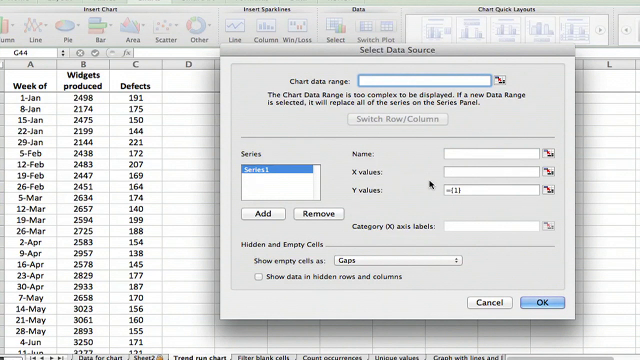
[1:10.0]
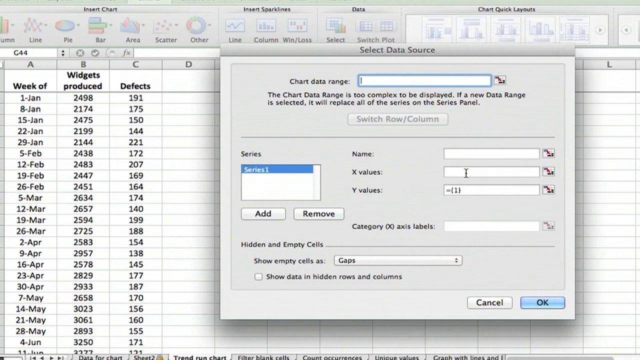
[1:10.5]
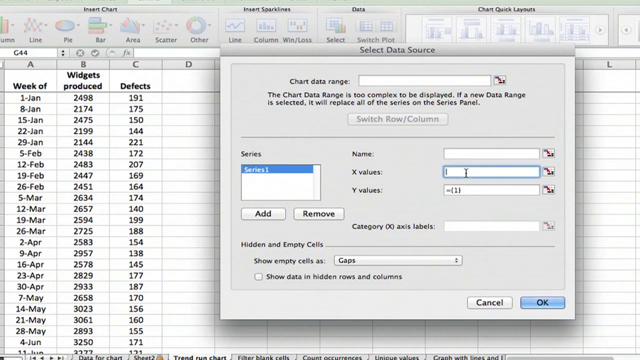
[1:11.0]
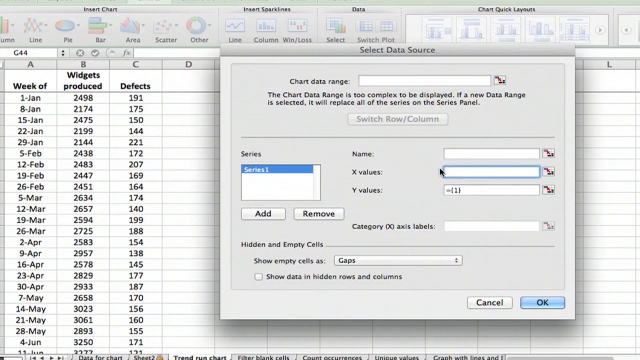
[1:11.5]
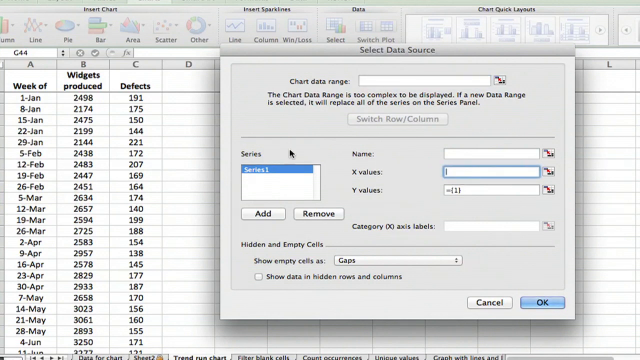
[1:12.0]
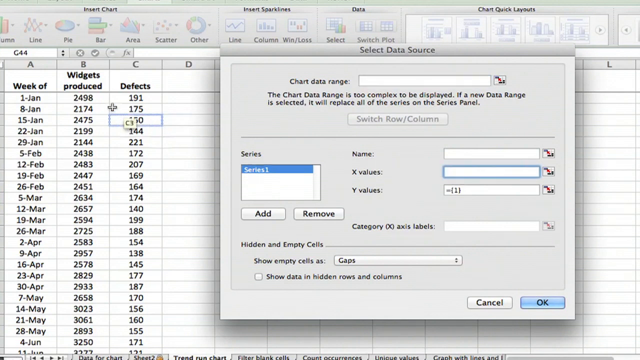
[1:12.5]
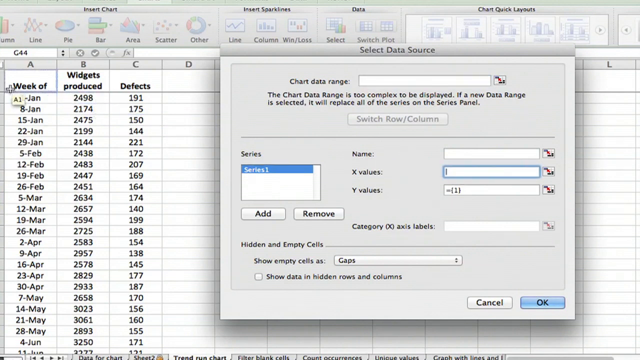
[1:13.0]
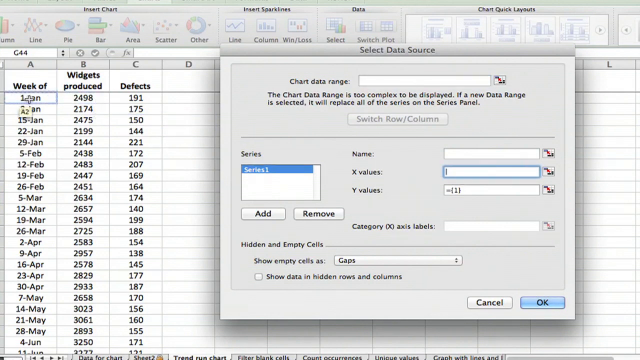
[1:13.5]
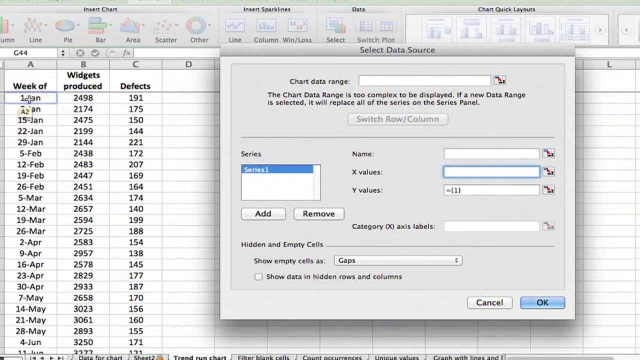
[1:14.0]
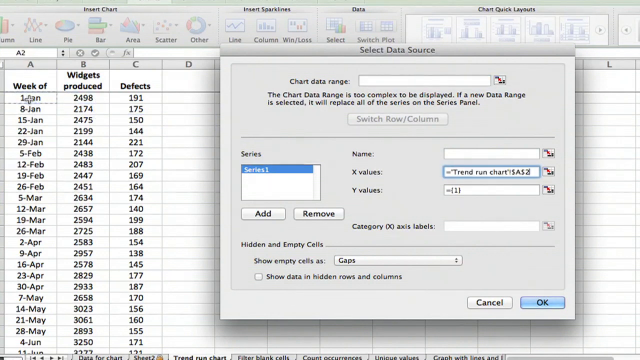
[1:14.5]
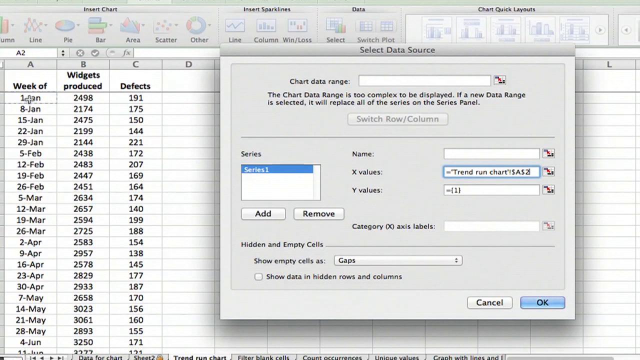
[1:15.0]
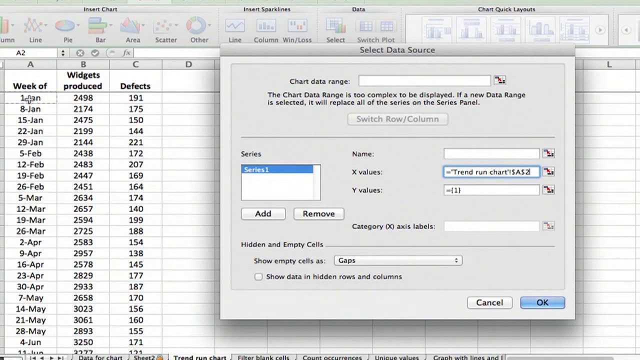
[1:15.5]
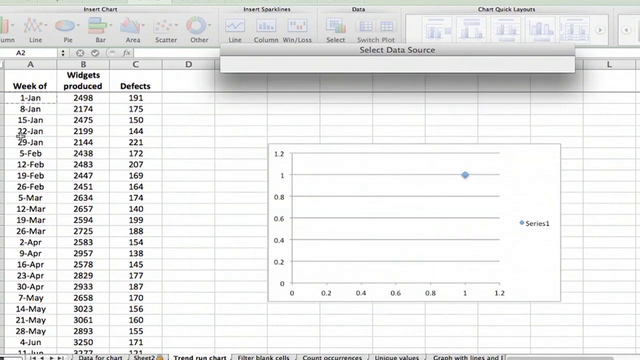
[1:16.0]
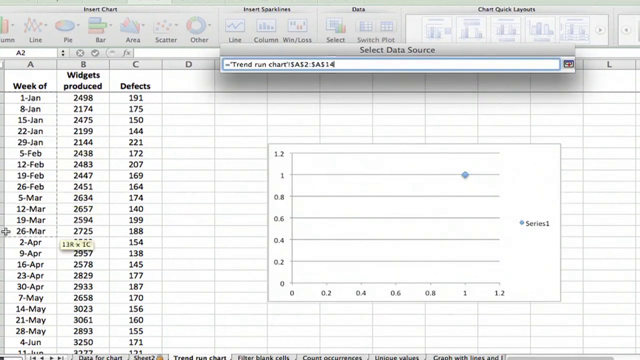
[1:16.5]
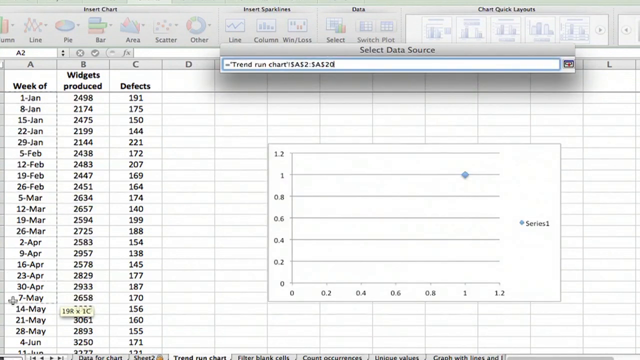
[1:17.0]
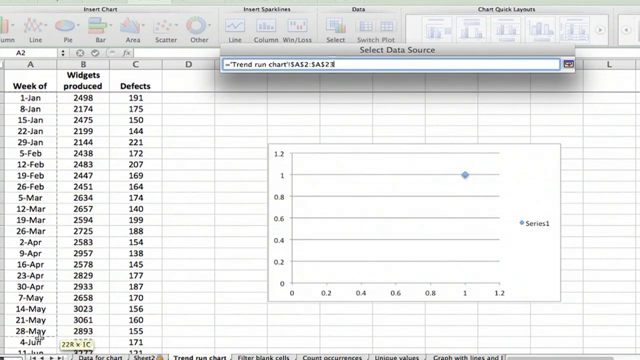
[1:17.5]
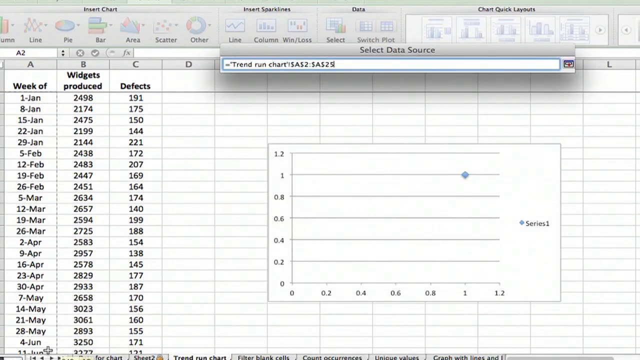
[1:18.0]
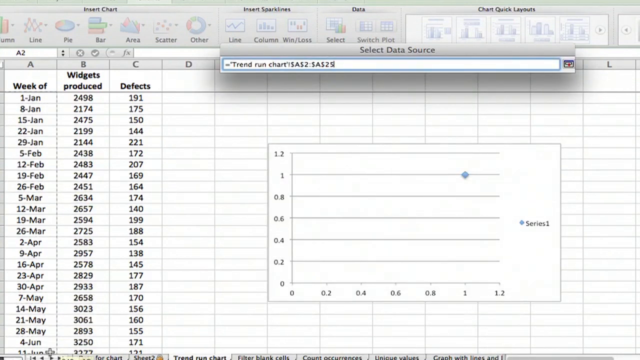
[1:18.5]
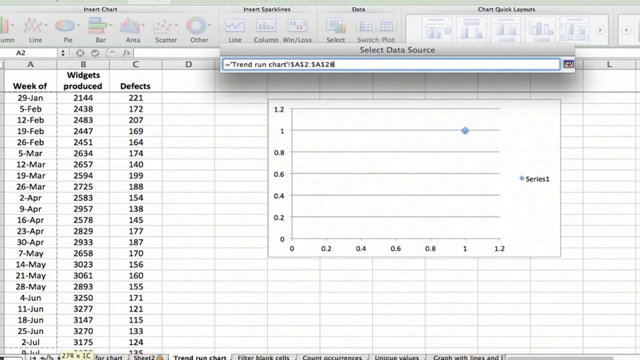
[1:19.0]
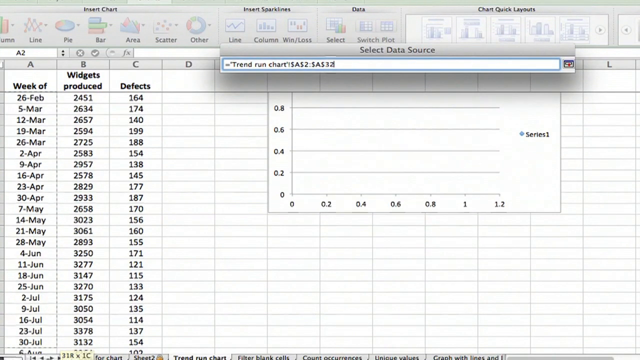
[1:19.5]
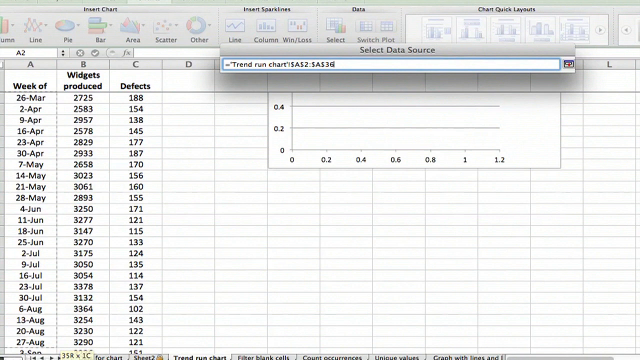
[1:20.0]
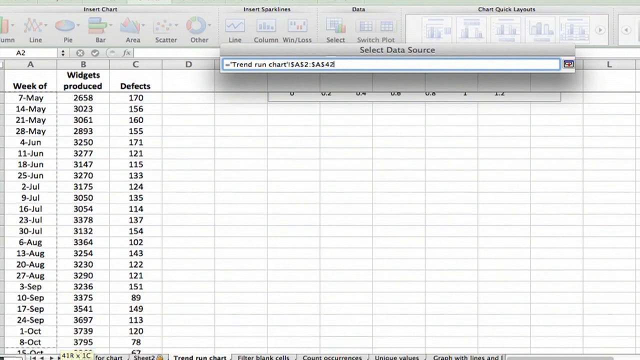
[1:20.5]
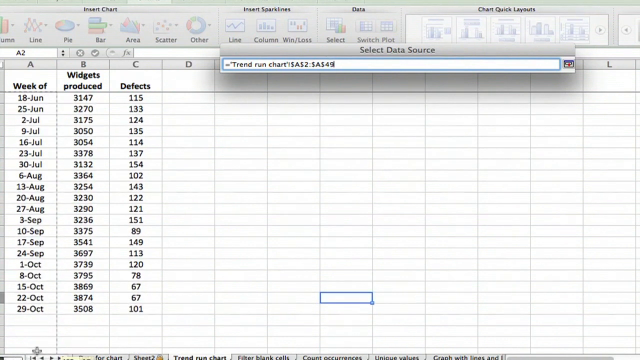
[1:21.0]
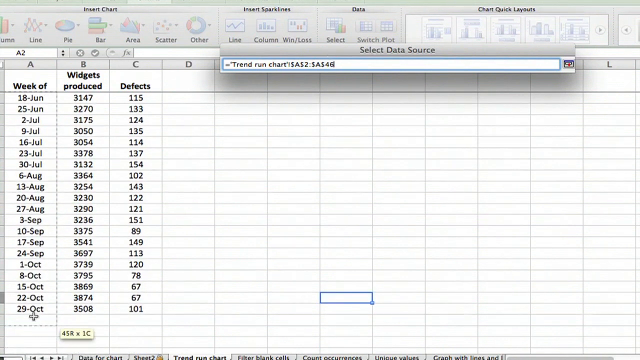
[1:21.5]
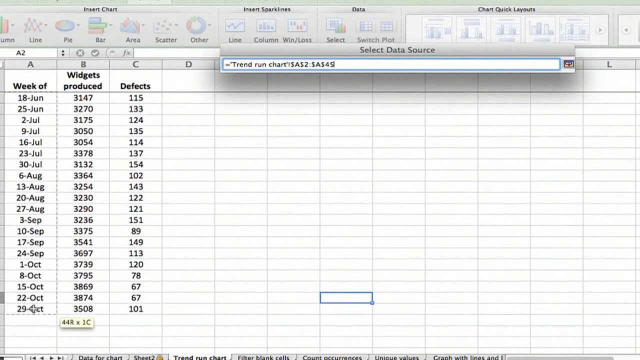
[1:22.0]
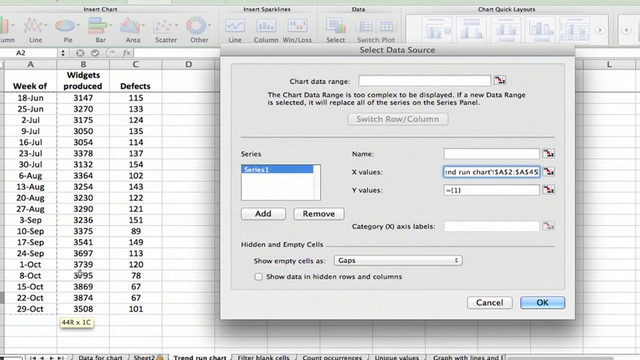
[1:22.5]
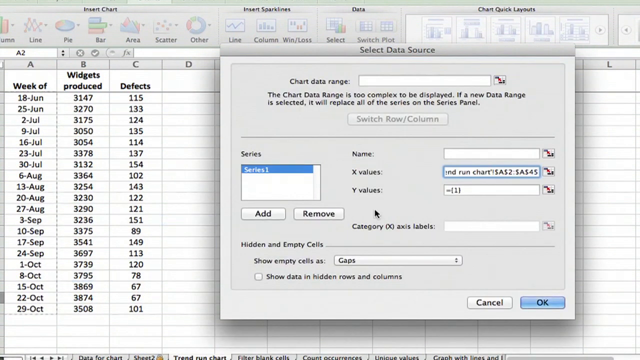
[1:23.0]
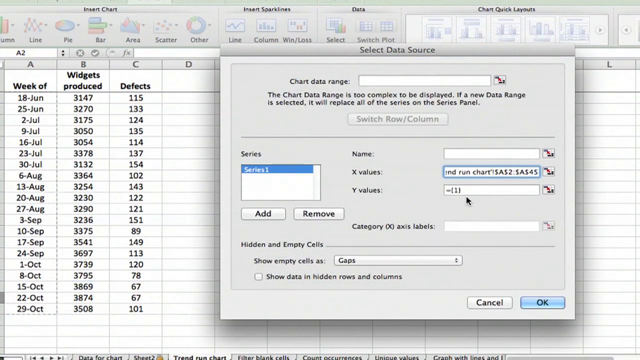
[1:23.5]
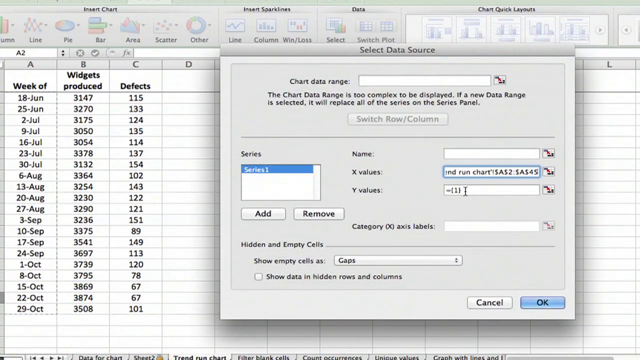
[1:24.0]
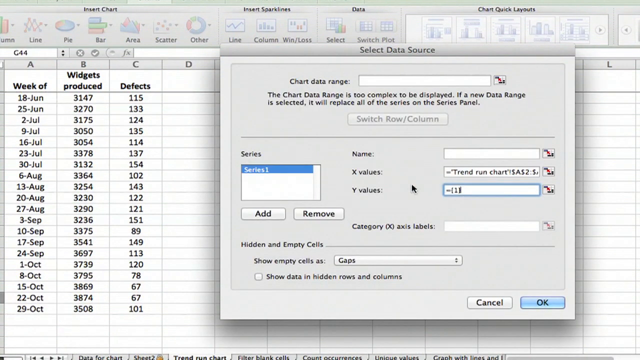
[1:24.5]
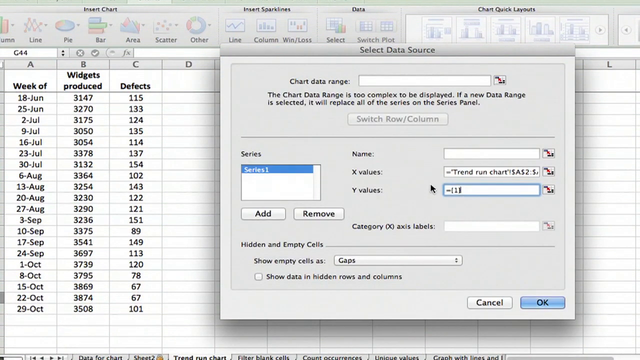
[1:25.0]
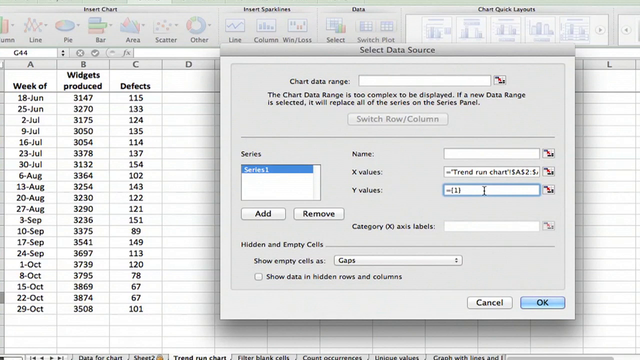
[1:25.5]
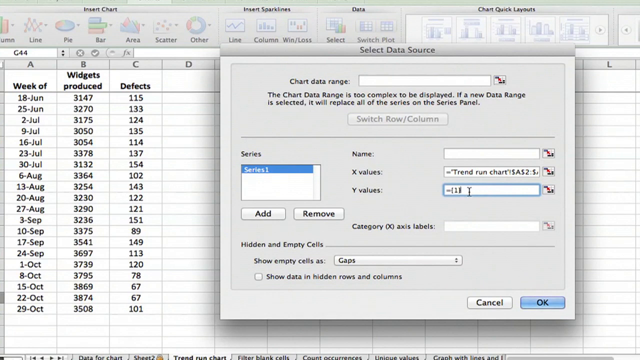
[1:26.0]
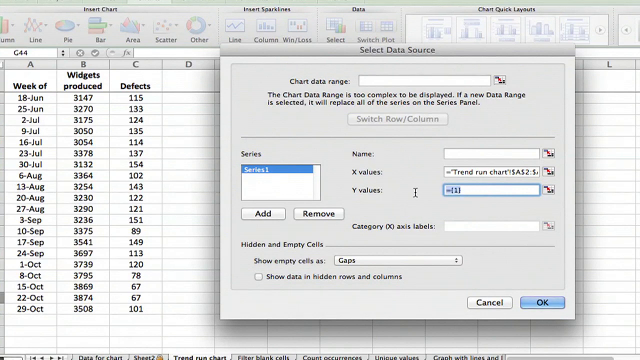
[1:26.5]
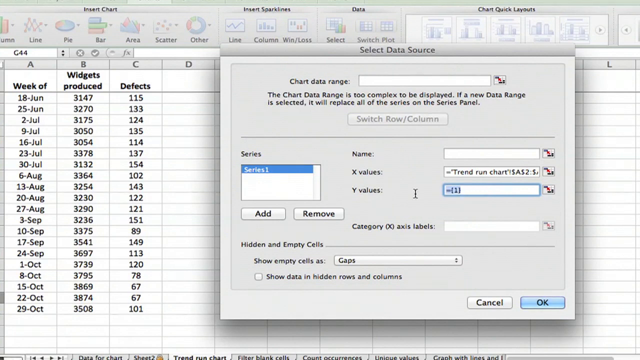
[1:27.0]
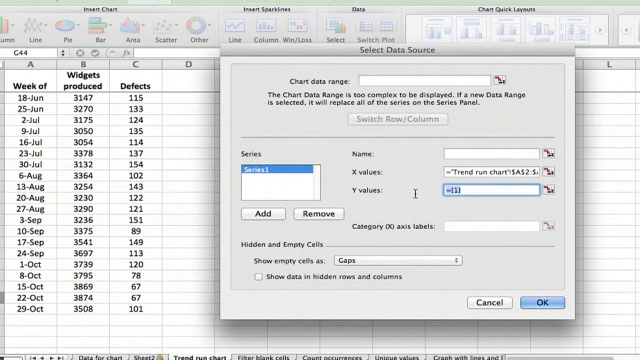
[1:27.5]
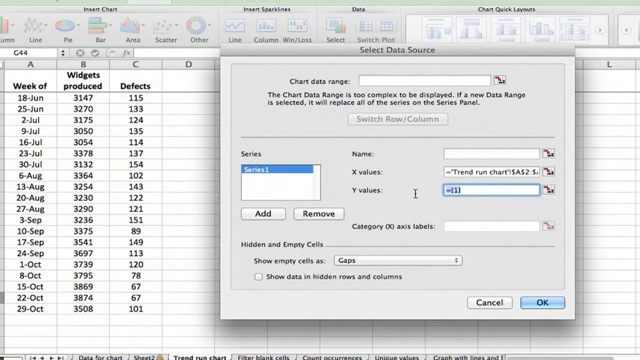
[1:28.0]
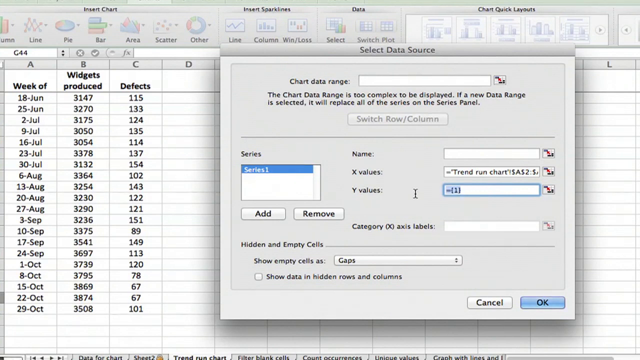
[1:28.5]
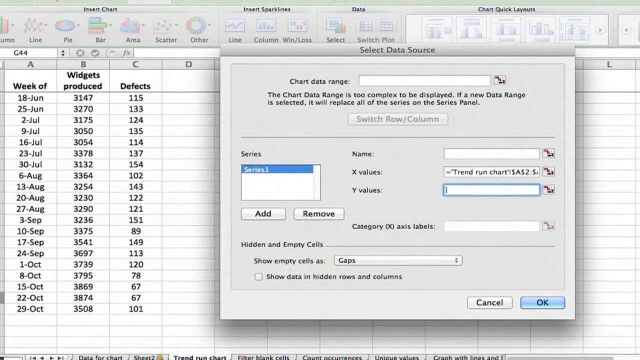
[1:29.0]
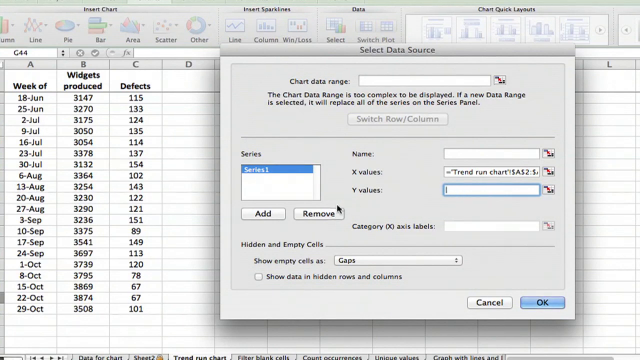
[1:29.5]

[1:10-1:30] An Excel document shows three columns of data: week of, widgets produced and defects. The user is attempting to chart the data on a marked scatter chart and is at the step of selecting the series of data for the chart. The user selects the column 1 data starting at A2 and going through A45, then highlights the data in the Y value field.